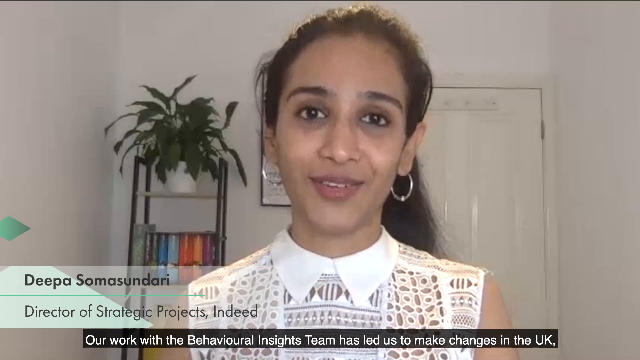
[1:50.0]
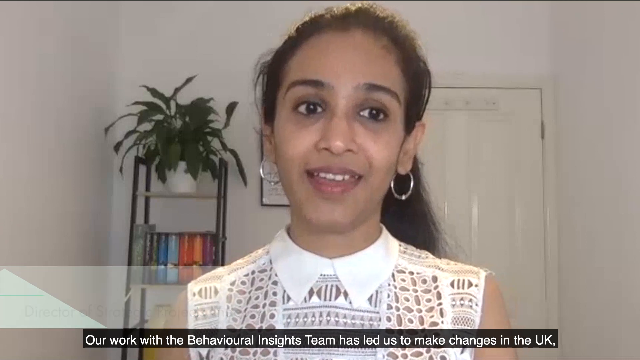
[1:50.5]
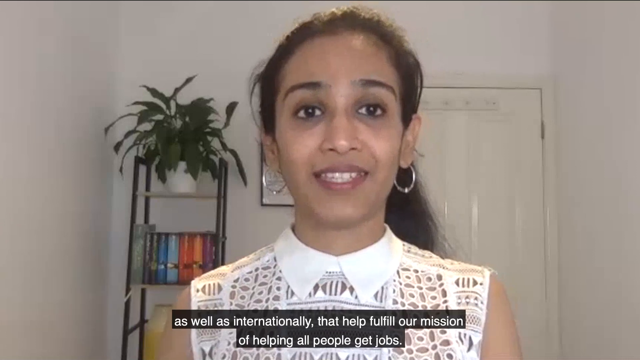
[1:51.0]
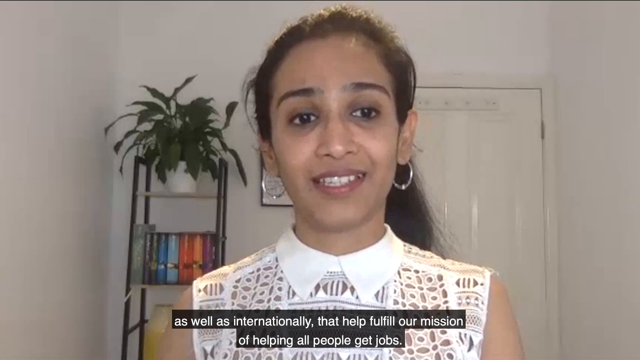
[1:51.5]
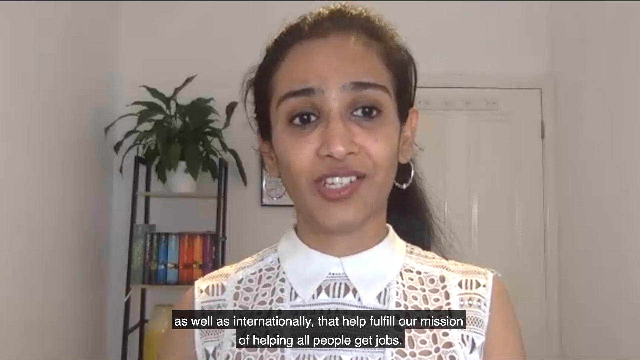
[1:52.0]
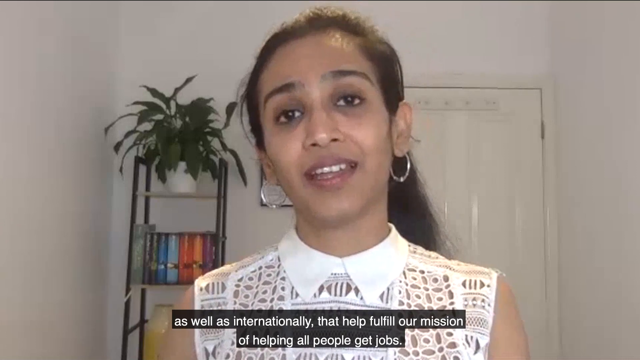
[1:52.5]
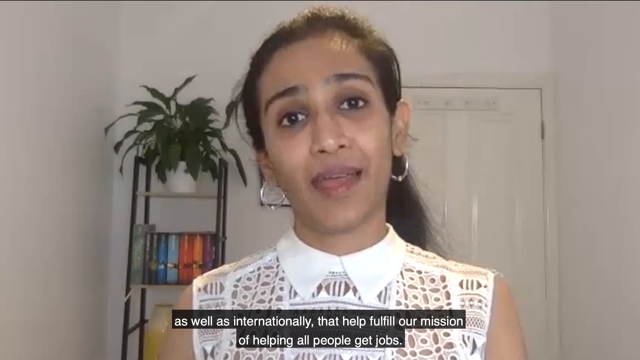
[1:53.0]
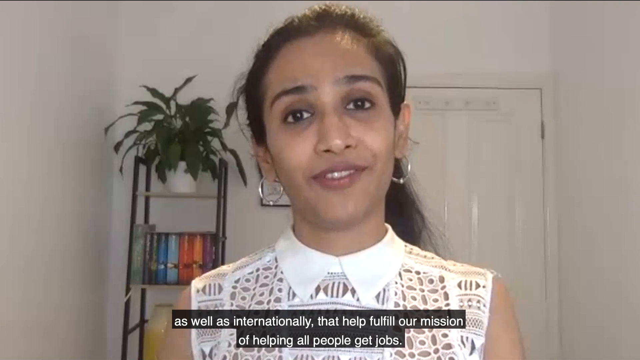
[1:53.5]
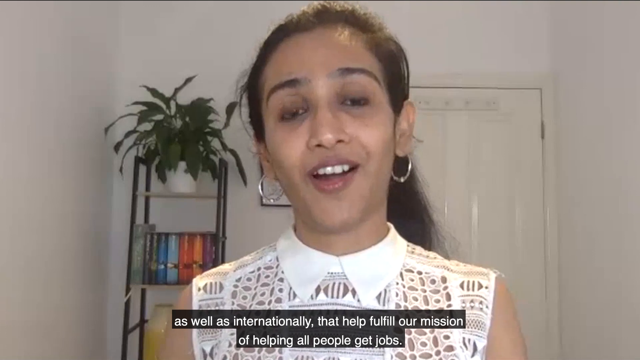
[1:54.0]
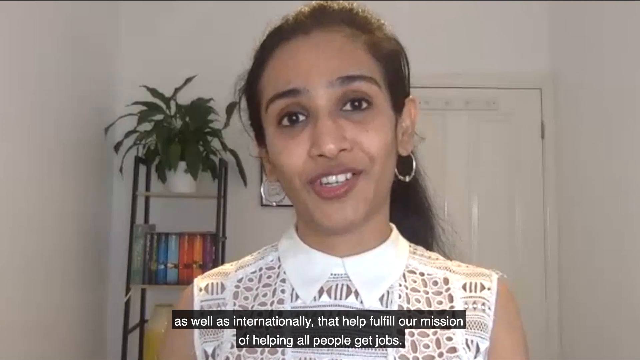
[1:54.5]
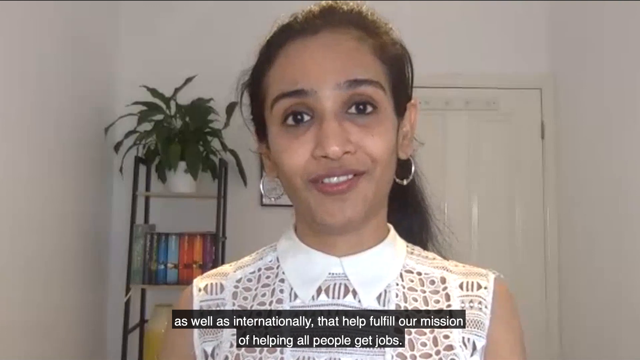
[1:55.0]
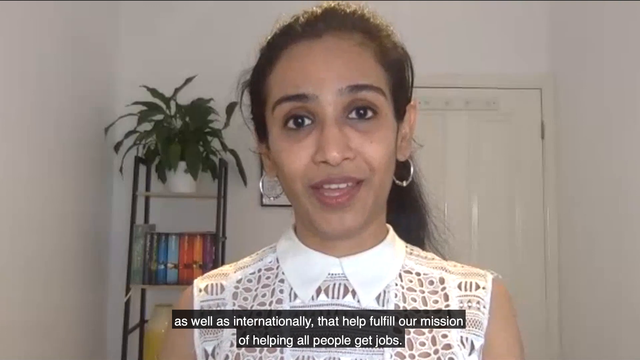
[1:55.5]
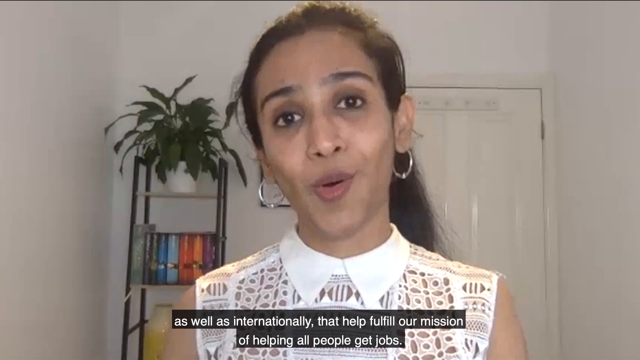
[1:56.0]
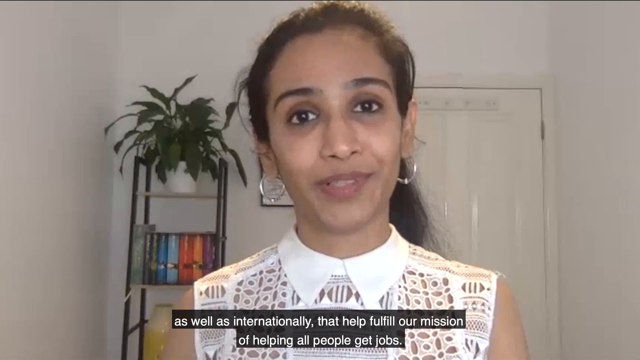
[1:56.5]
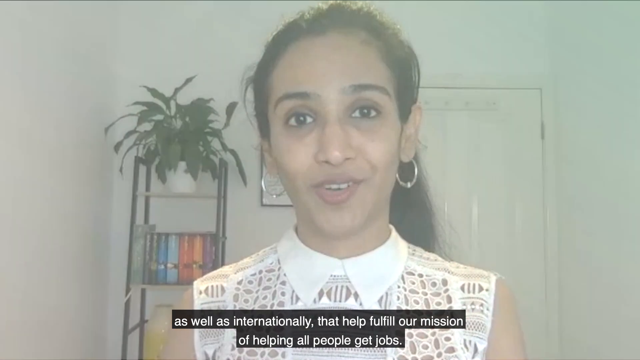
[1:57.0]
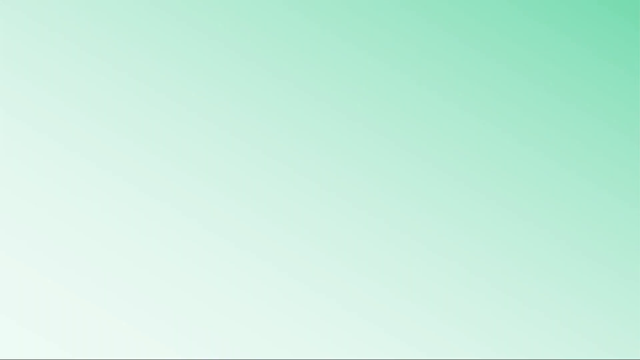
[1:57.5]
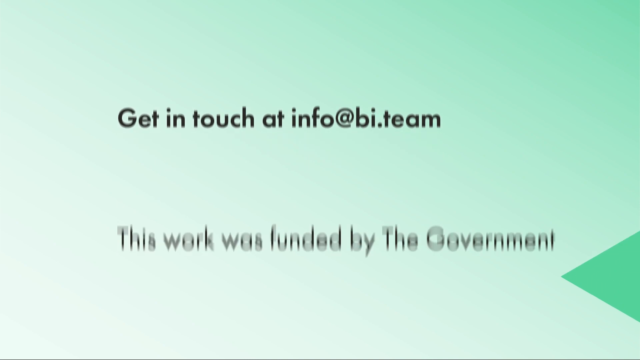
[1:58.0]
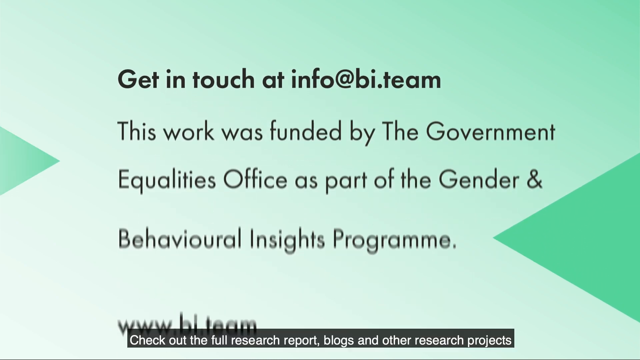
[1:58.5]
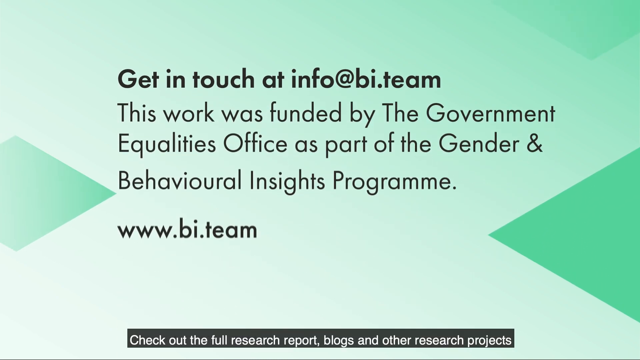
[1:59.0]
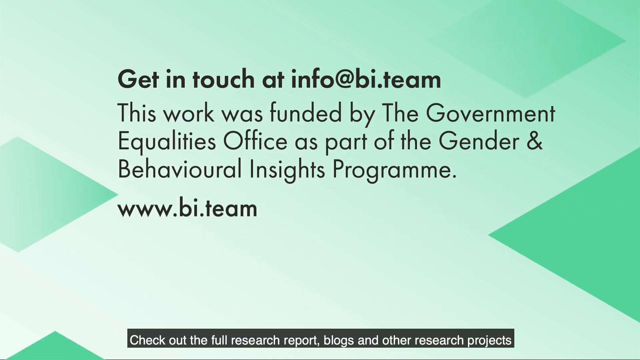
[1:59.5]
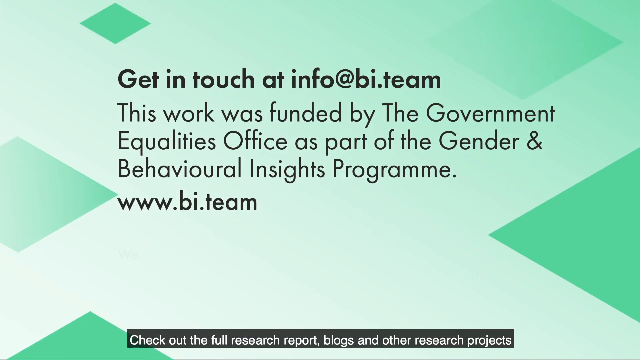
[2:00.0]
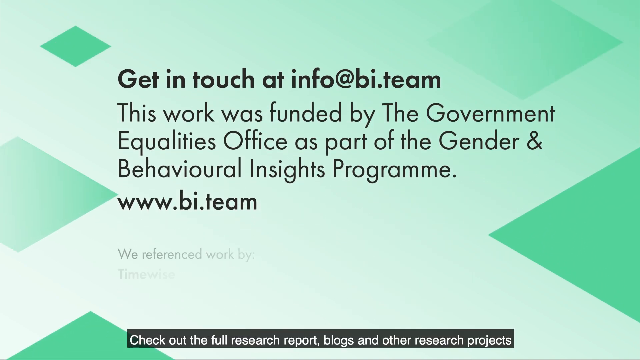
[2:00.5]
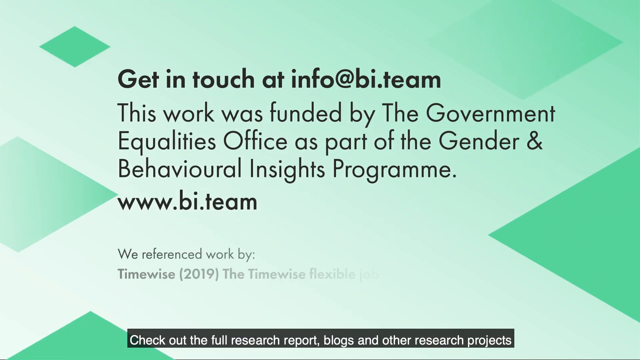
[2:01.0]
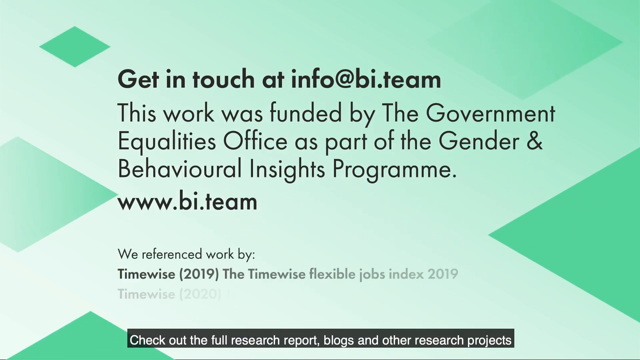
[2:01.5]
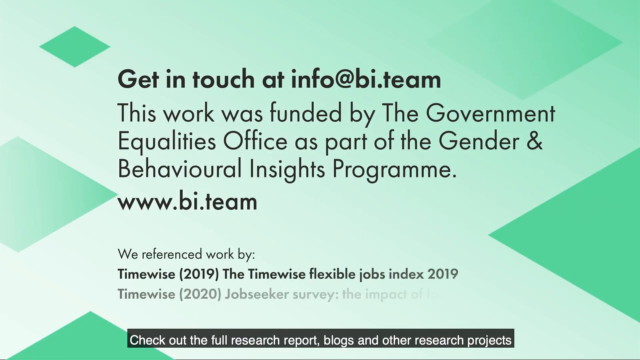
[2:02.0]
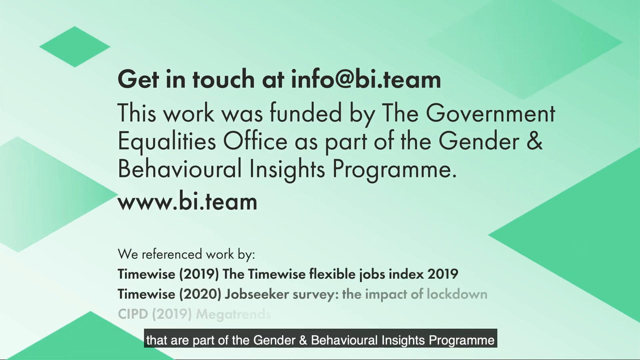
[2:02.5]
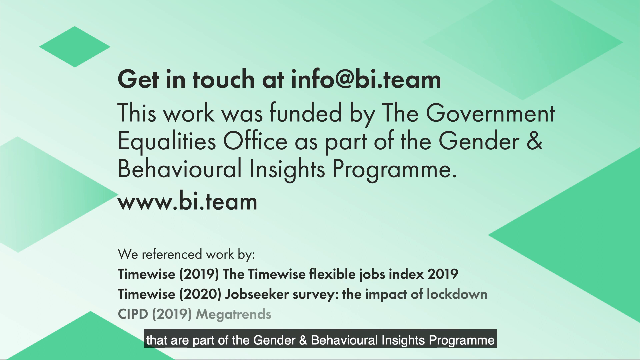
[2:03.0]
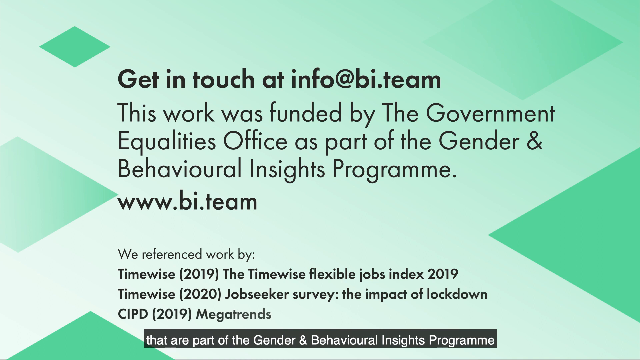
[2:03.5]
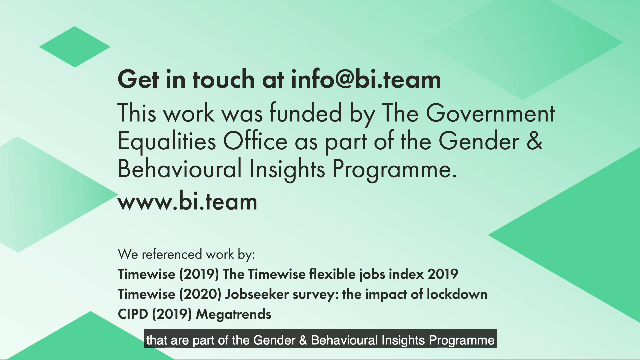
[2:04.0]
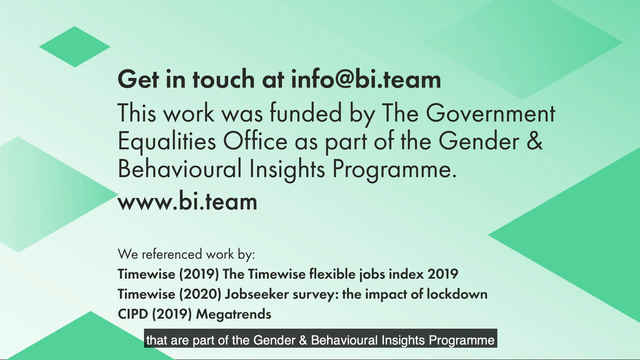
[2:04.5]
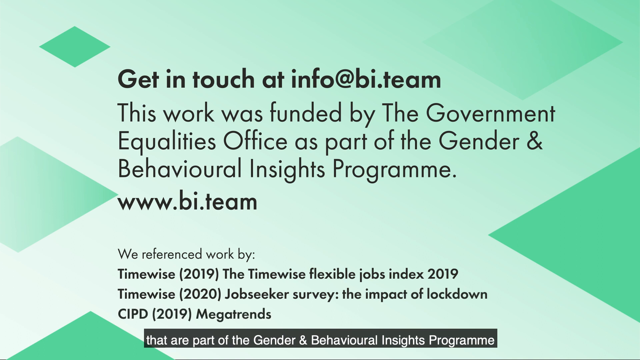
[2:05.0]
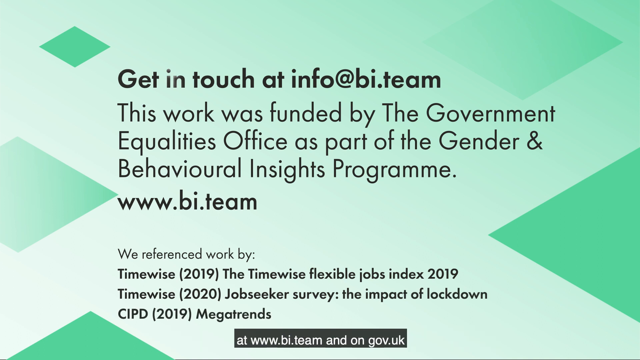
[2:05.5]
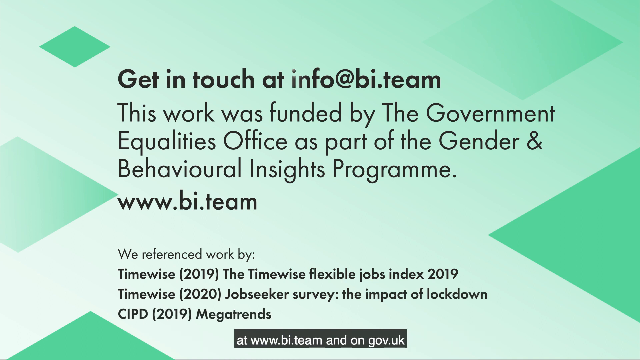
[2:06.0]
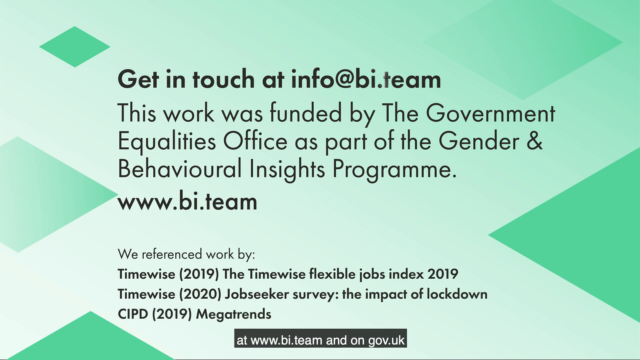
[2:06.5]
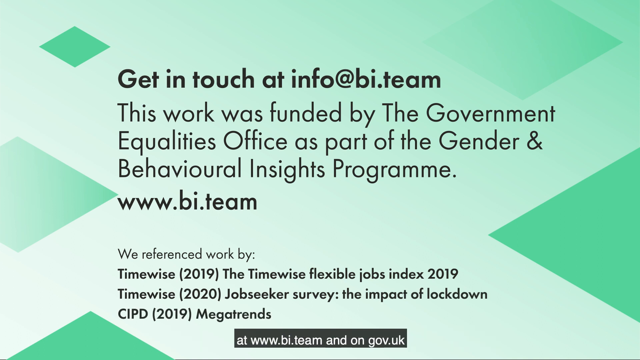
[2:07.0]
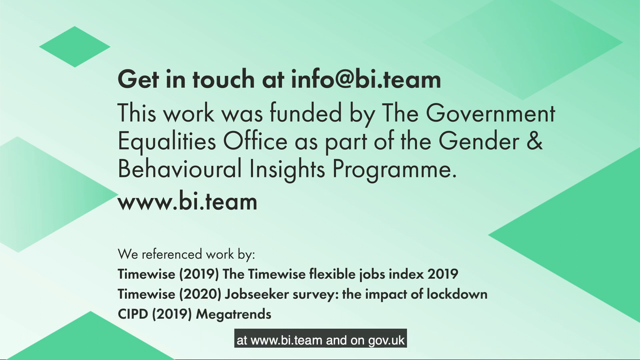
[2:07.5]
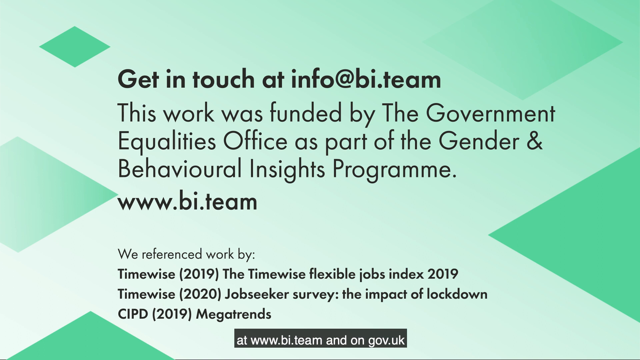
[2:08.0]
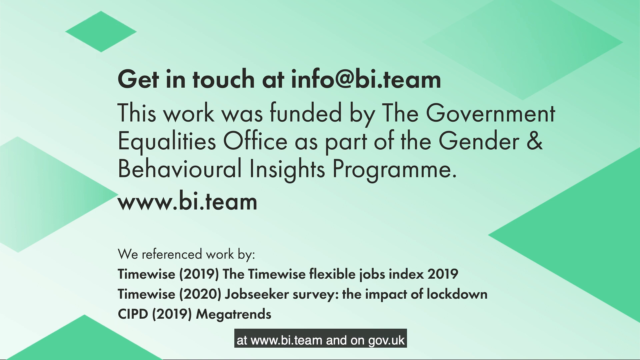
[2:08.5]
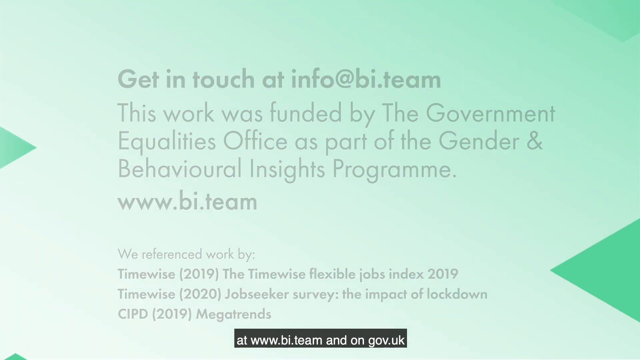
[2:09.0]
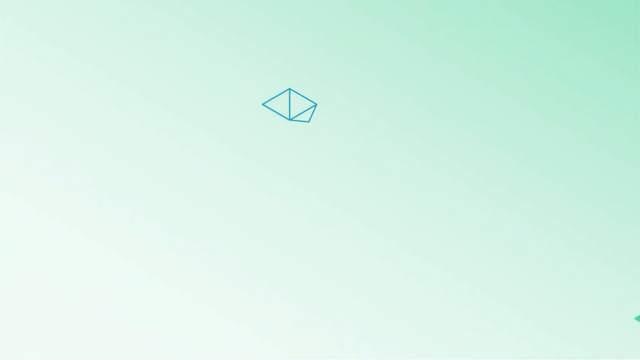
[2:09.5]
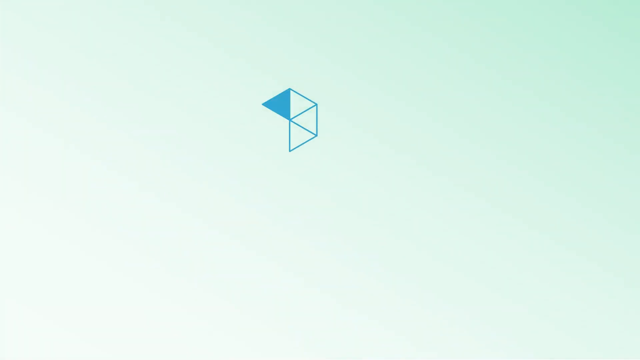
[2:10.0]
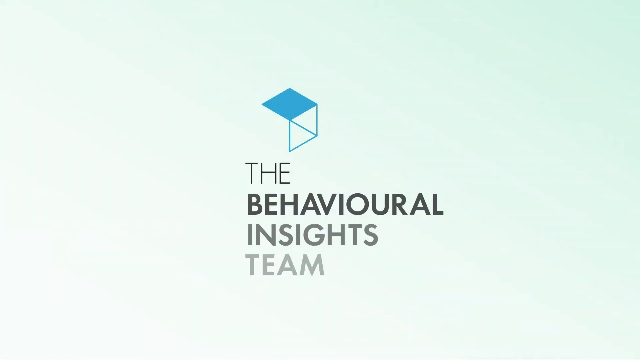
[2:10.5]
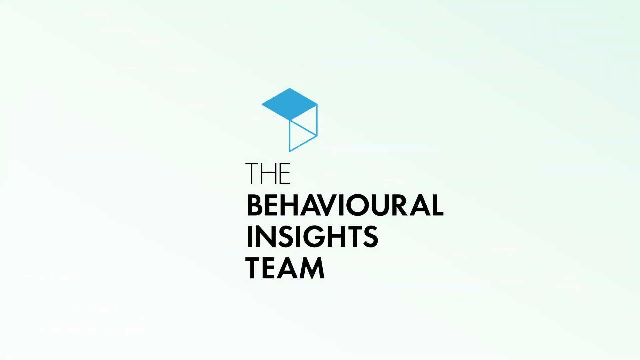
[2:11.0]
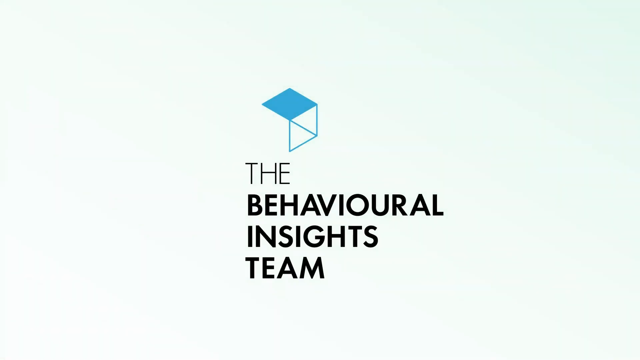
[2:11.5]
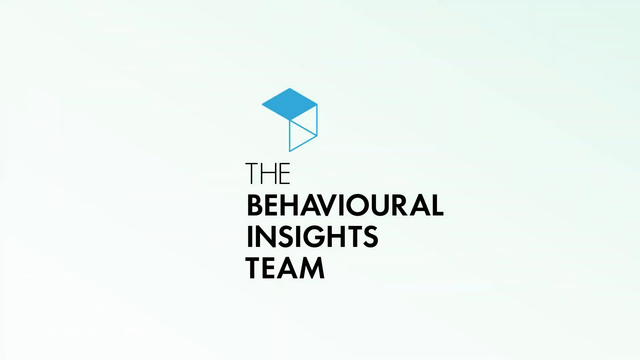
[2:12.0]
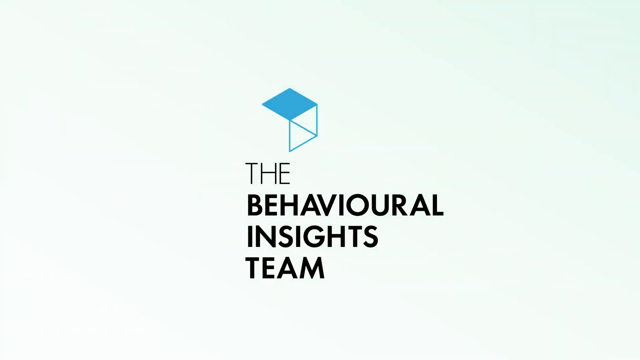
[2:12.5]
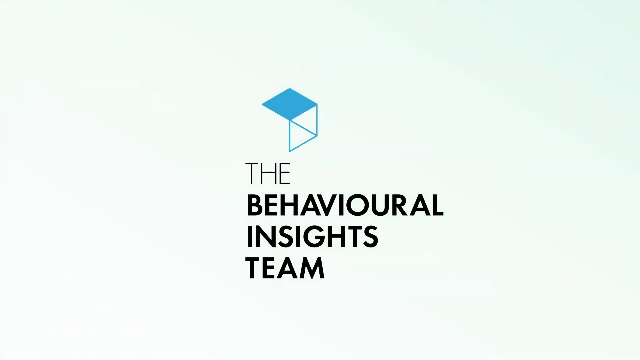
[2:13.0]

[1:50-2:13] In this ad of sorts for Indeed, a woman who appears to be of Indian descent is in the center of the frame. She has black hair and silver hoop earrings and wears a white collared shirt with lacy-looking cutouts. Her name appears on the left as DEEPA SOMASUNDARI, director of strategic projects for Indeed. She speaks, apparently about the results of the trial leading to changes in the UK, and the caption says they also made changes internationally, reading "the mission of helping all people get jobs." Behind her are a plant and books on a bookcase, and to the right a white door. Next, a green background with geometric shapes appears, with black centered text: "get in touch at info at bi.team. This work was funded by the government equalities office as part of the gender and behavioral insights program." Another website comes up at the bottom, followed by "we referenced work by TimeWise 2019, the TimeWise flexible jobs index 2019, TimeWise 2020 job seeker survey, the impact of lockdown, CIPD 2019 megatrends," as more graphics come up. Finally, a green background shows a blue cube in the center of the screen with black text reading "the behavioral insights team," and the video lingers on it.